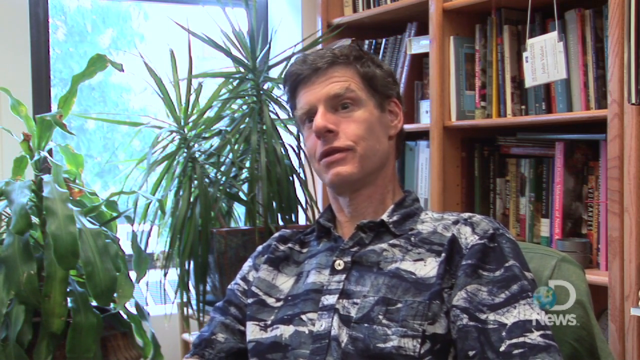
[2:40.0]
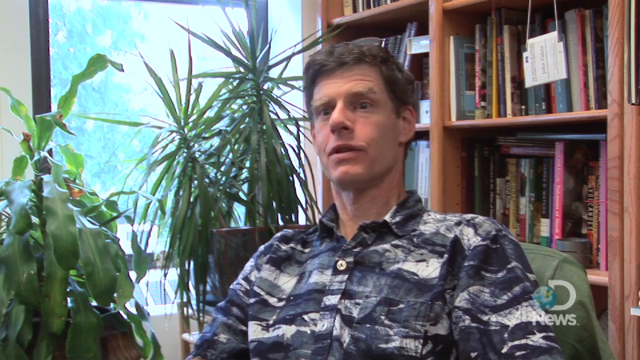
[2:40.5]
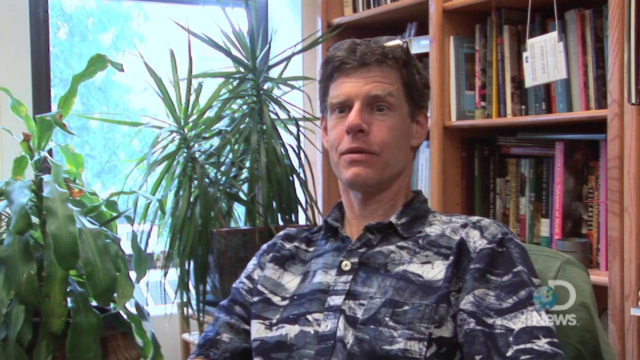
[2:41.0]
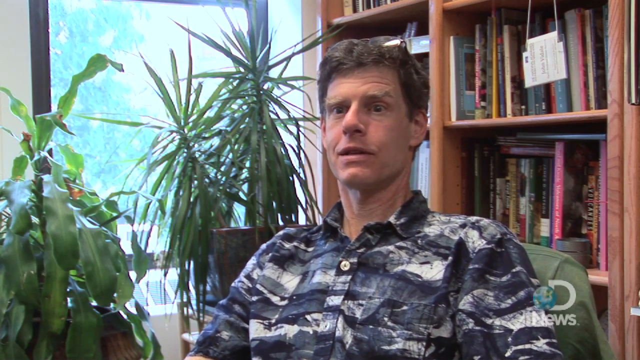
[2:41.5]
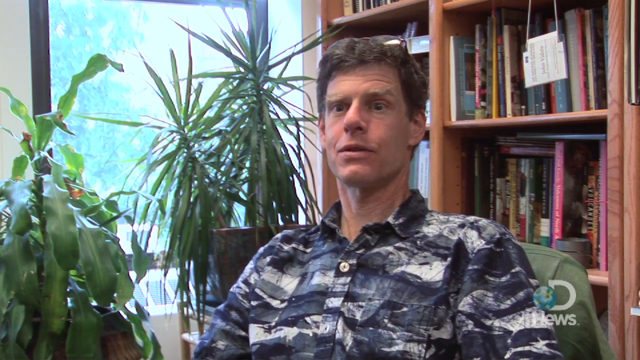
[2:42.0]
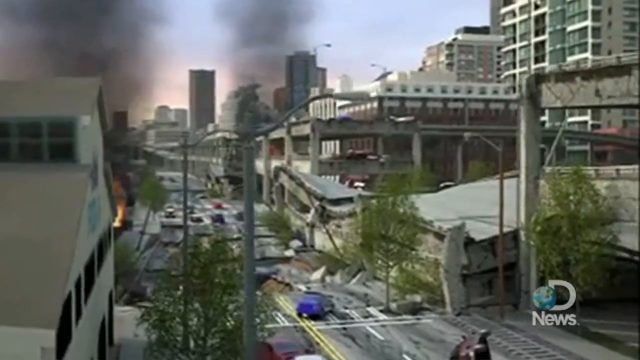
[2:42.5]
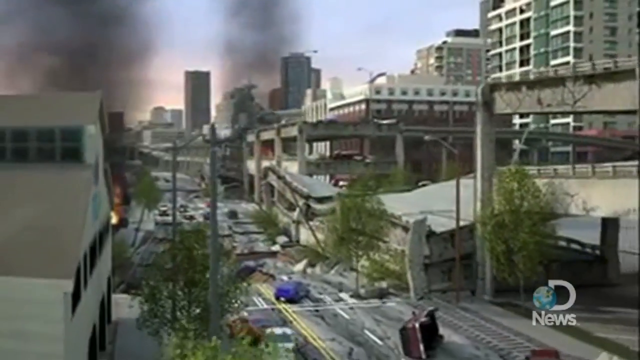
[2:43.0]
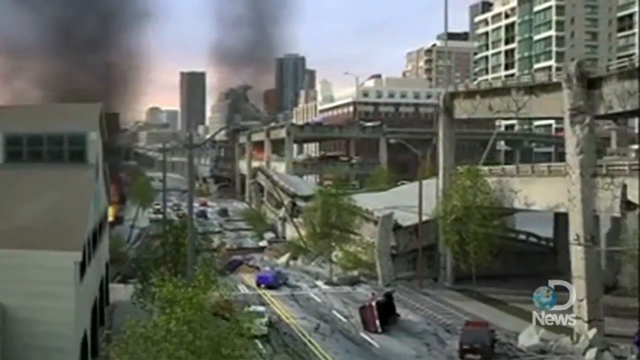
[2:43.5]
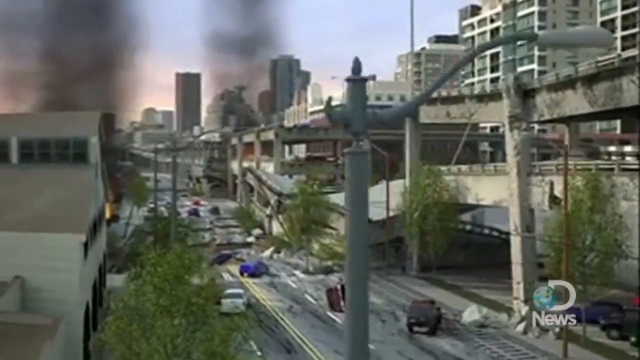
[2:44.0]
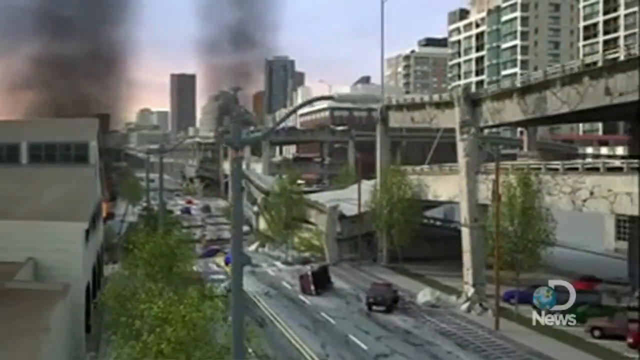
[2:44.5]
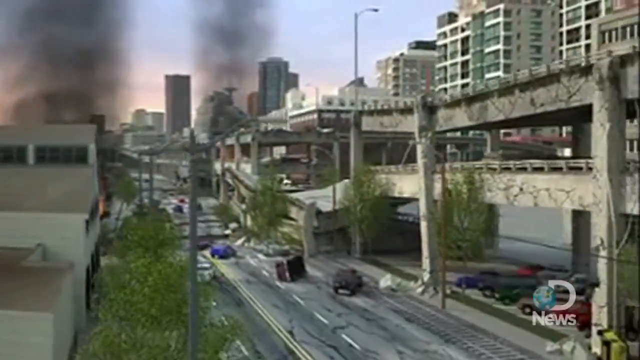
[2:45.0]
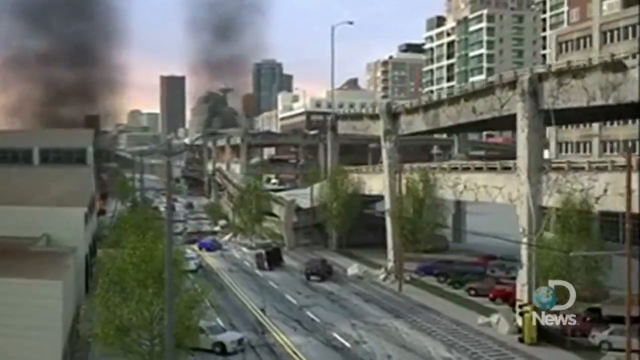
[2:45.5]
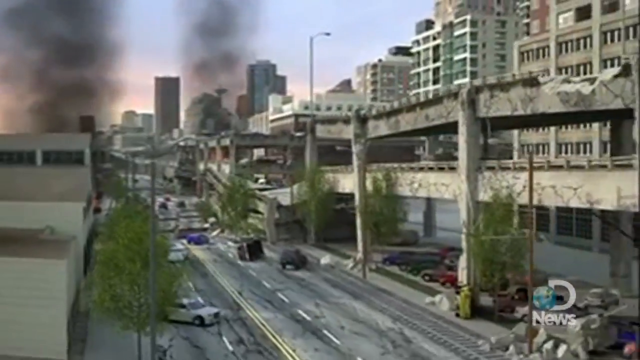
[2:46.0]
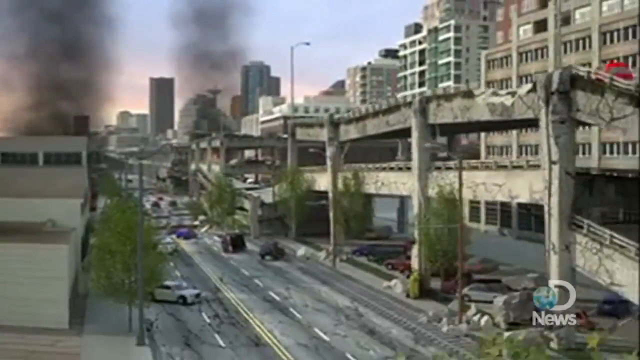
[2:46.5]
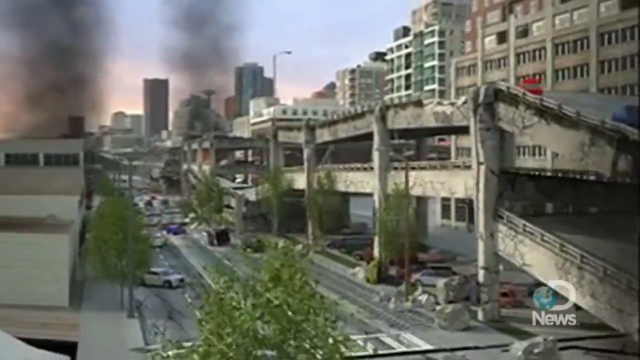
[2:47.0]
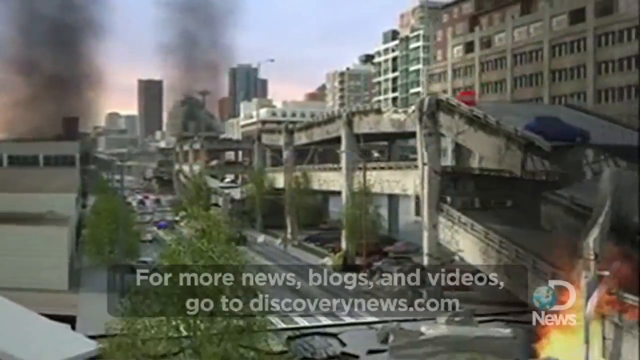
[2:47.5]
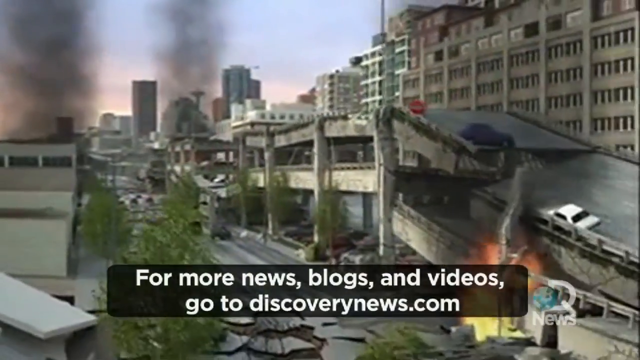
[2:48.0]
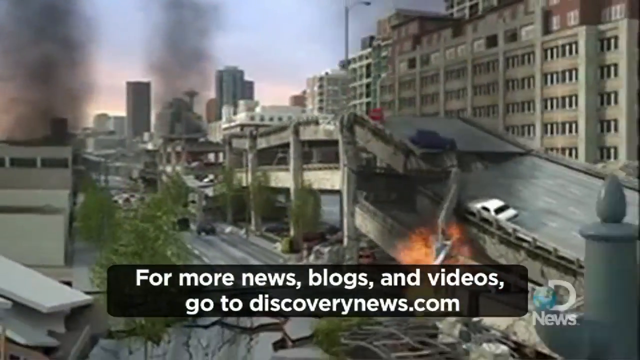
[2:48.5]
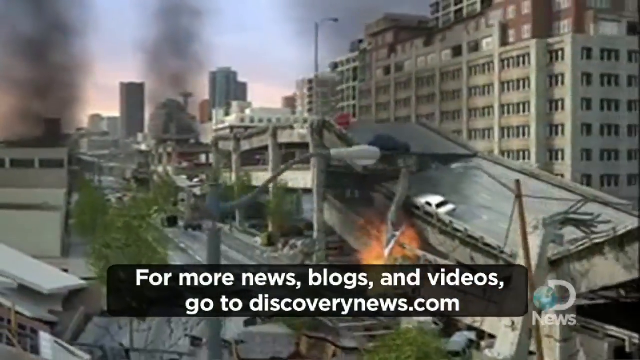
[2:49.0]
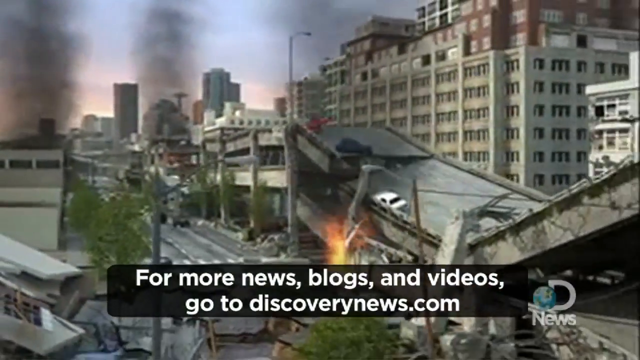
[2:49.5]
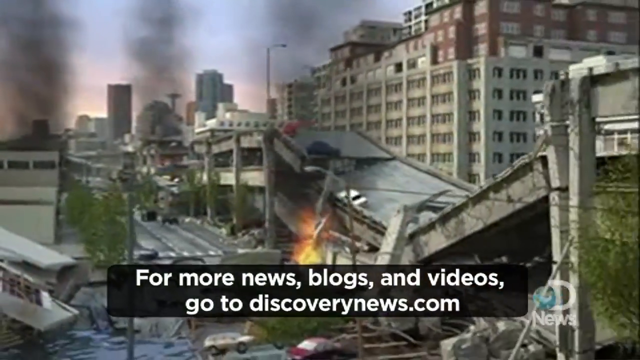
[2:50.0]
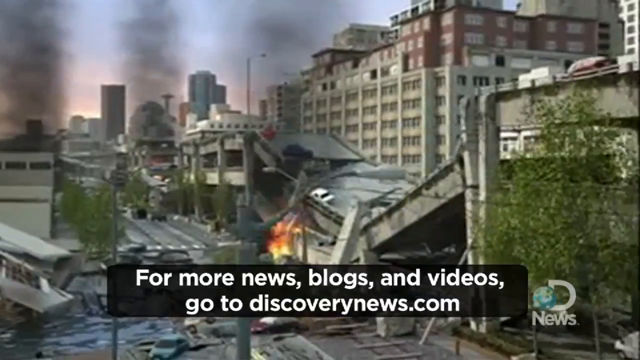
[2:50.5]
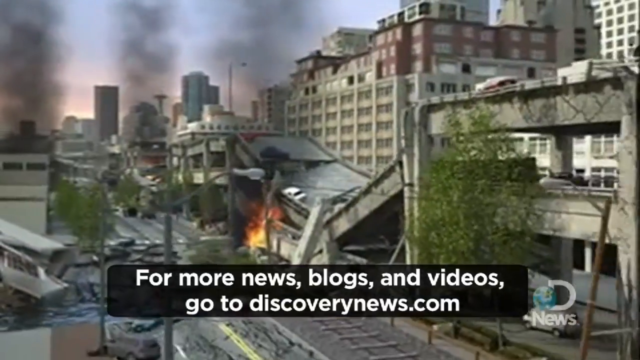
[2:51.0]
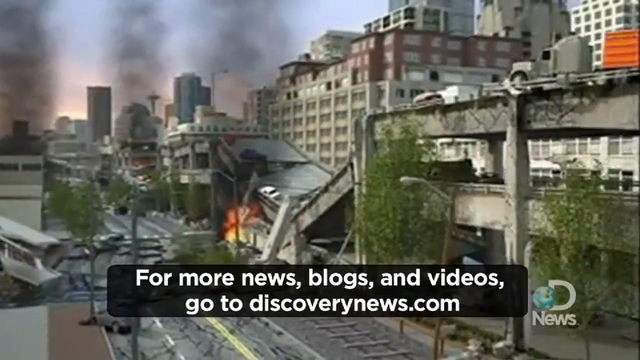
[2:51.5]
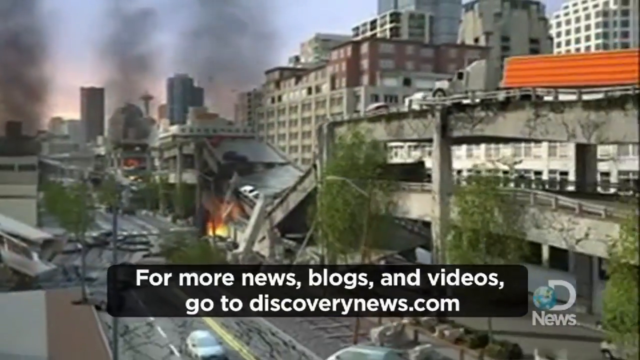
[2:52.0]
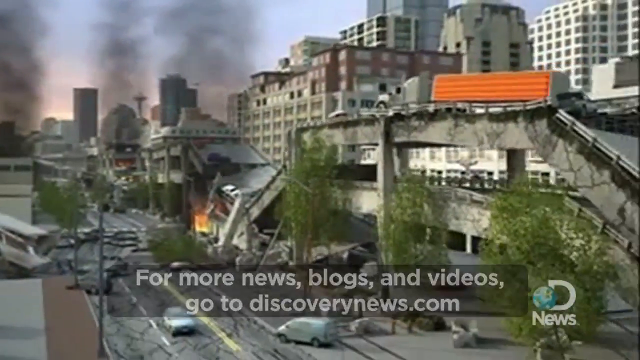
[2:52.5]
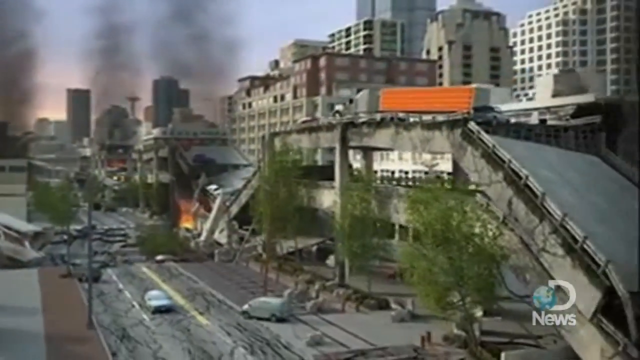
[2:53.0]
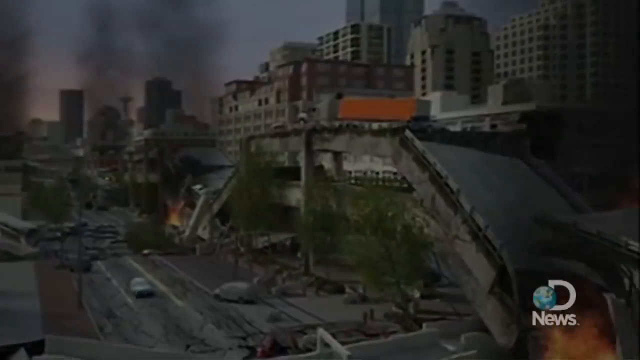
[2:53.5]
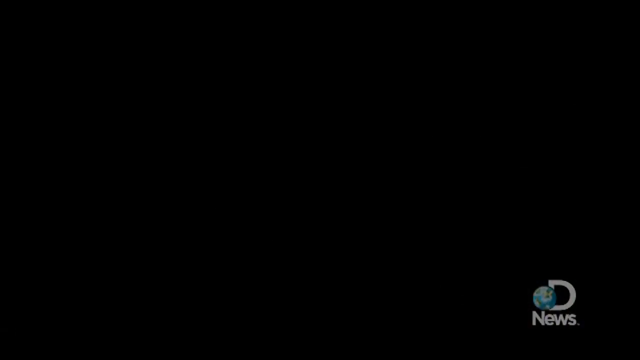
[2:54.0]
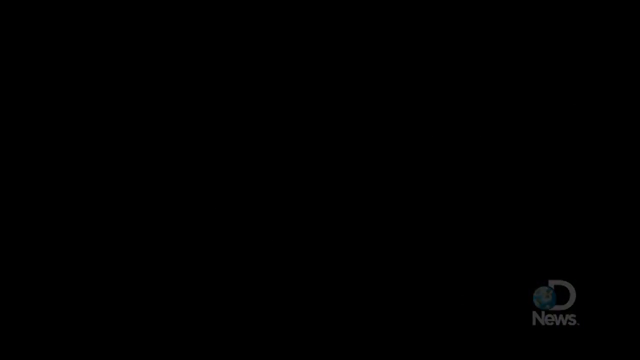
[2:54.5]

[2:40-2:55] A computer-animated simulation shows the highway buckling and being devastated, with the cars that were on it. Professor Vindale continues talking. Two large billows of black smoke rise from areas of the city, then another one, and fires break out in different areas. There are a lot of cars on the highways, and cars, including semi trucks and 18-wheeler trucks, go into the water. The double-decker highway buckles on top of itself. The asphalt is broken up in many places, and cars have fallen into the water where the asphalt completely separated and into holes where the ground opened up.